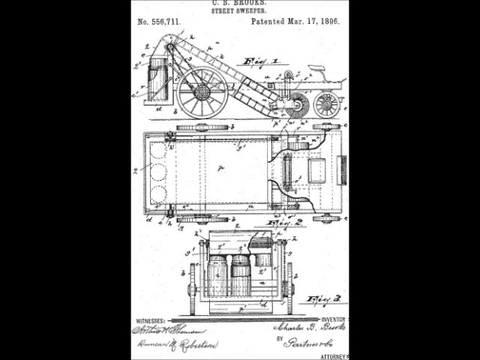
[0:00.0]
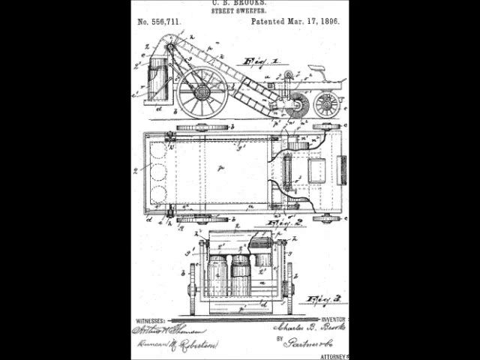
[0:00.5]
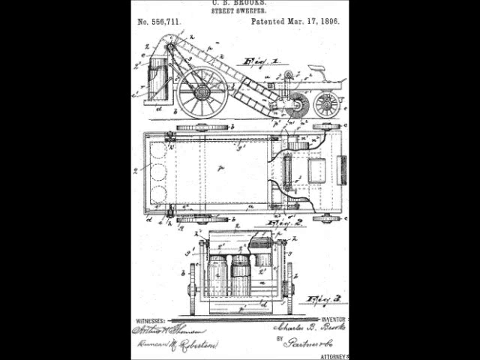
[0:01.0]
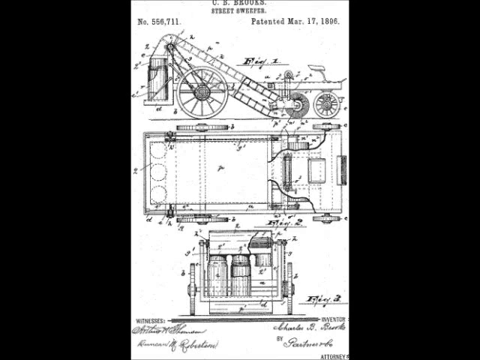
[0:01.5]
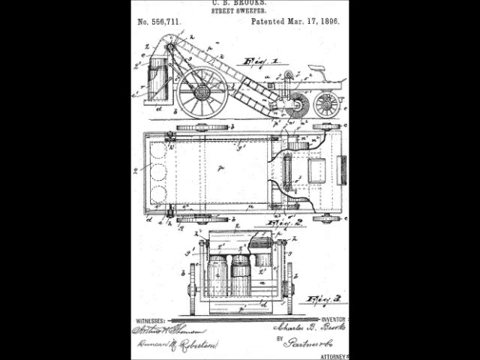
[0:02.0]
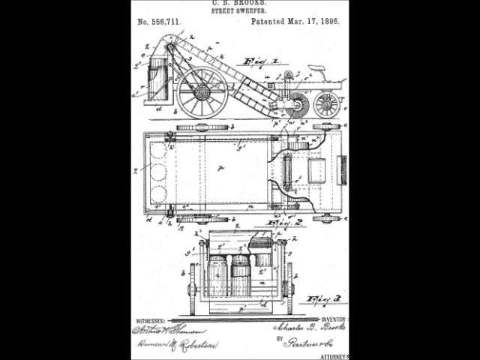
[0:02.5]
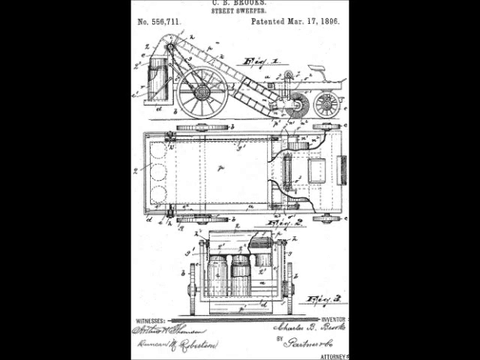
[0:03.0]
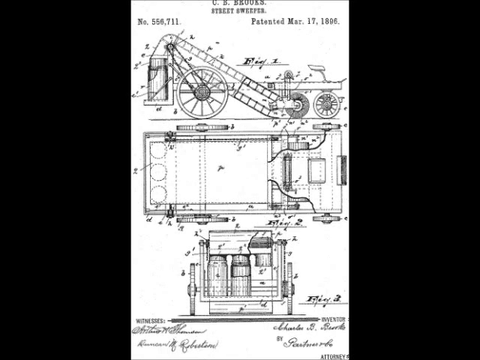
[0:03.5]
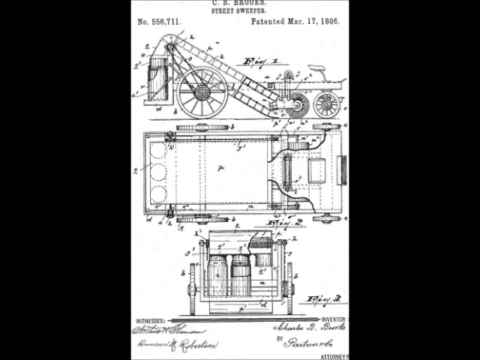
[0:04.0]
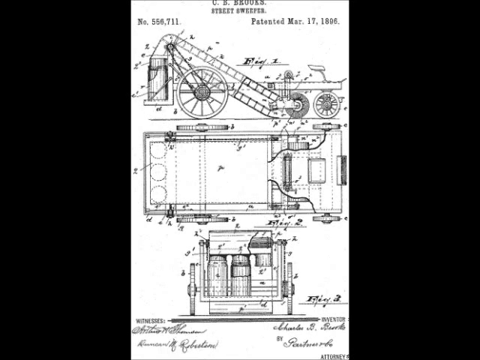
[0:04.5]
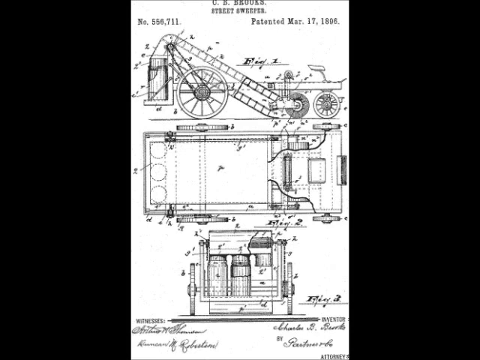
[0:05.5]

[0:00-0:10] The video opens with a diagram arranged in three levels. At the very top it reads "CB Brooks Street Sweeper number 556711," and at the top right it reads "Patented March 17, 1896." The diagram includes a side view, a top view and a back view. The side view has many parts labeled with letters of the alphabet. It shows two wheels, a wheel in the front and a bigger wheel in the back, and a circular street sweeper somewhat closer to the front wheels, along with the whole process of taking debris and carrying it up and around the back wheel into a basket at the back. The top view shows three tubes that trash from the street can be dumped into, and the back view shows two full containers and a third that is somewhat different, possibly the motor.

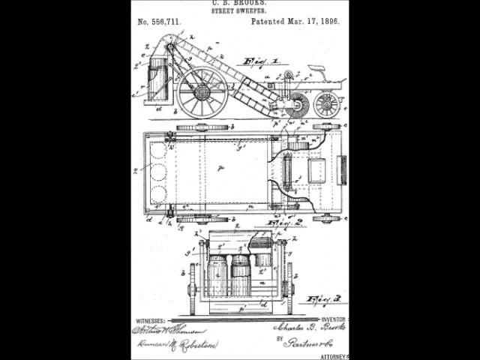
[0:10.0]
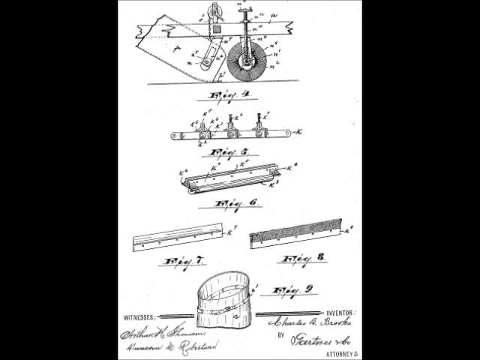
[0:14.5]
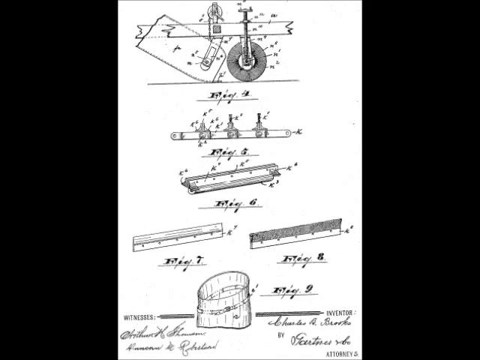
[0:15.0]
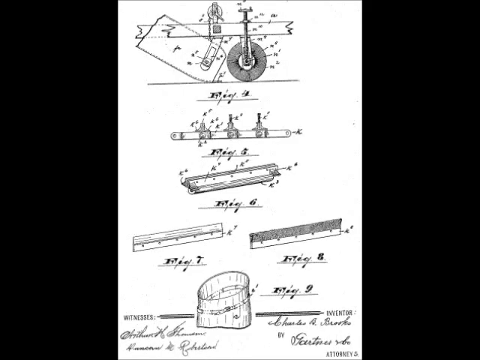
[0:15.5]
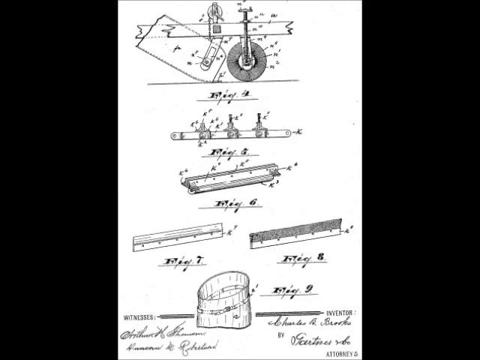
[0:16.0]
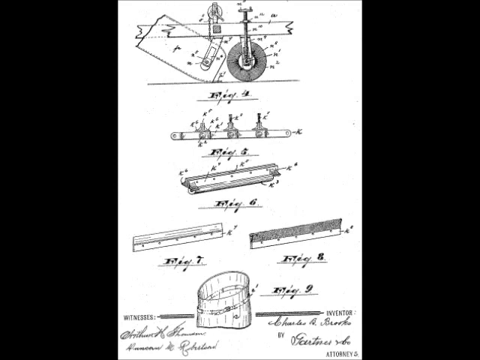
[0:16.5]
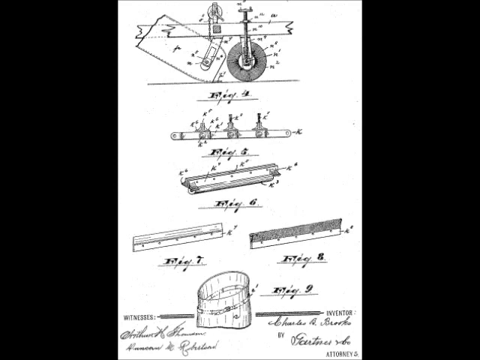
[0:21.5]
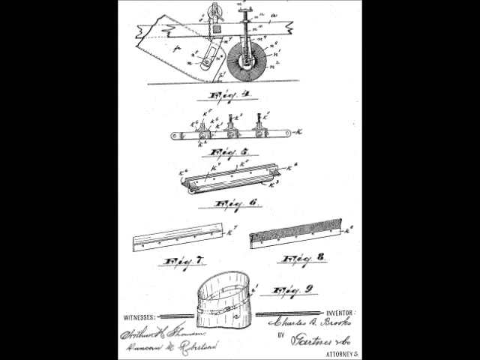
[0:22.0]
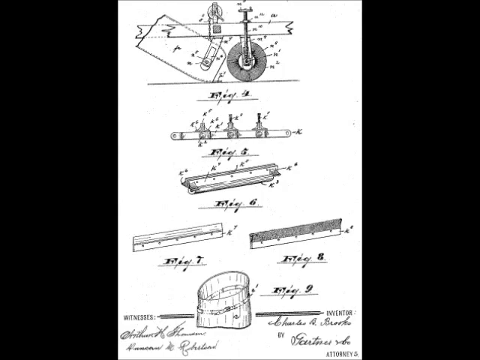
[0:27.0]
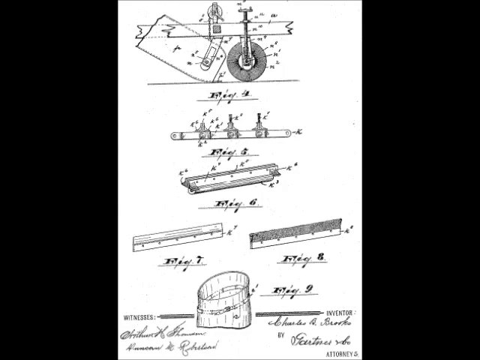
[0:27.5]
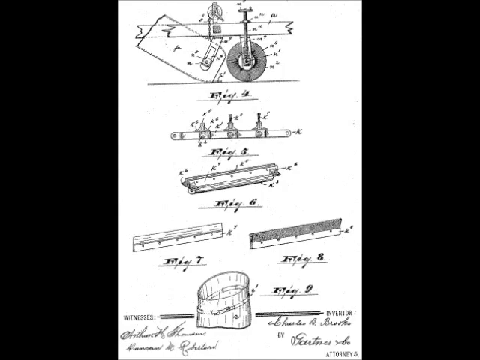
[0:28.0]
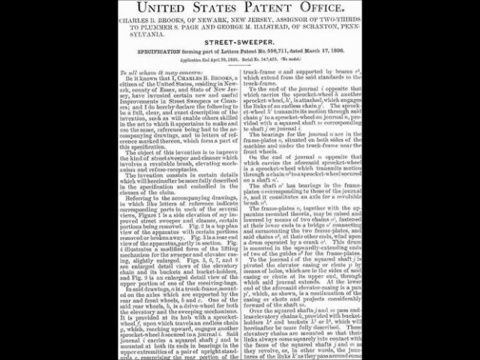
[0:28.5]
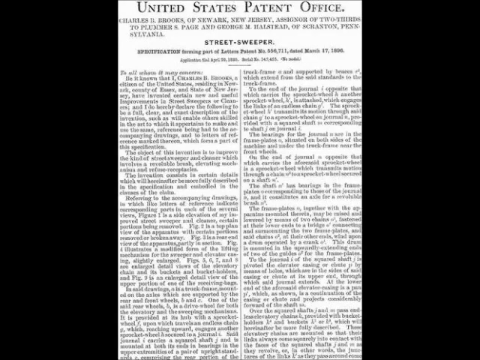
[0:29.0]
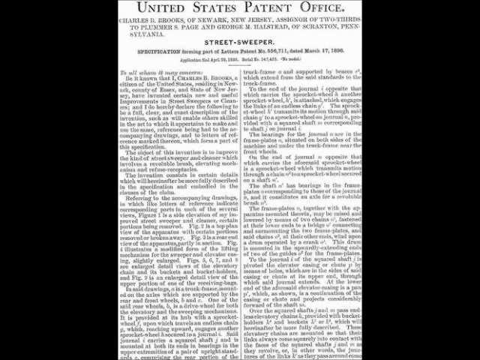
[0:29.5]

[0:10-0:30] A diagram of a street sweeper shows a side view, a top view and a back view. The side view shows a large wheel in the back and a smaller wheel in the front, with the sweeper's brushes just behind the front wheel and a ramp that debris goes up before dropping into baskets at the back. The top view shows three such baskets at the back. The bottom view shows two canisters at the back and a third that is a little less complete. The diagram is from 1896, when the street sweeper was patented. The next image shows more action: a closer look at the sweeping mechanism itself, the brush, and the device trailing it that picks up the debris being swept into it, with various parts of the machine illustrated. Then a United States Patent Office page gives details; it looks like a newspaper article of some sort.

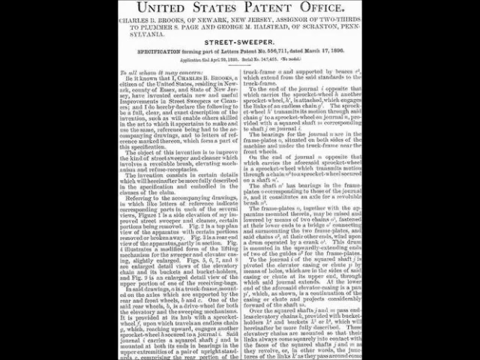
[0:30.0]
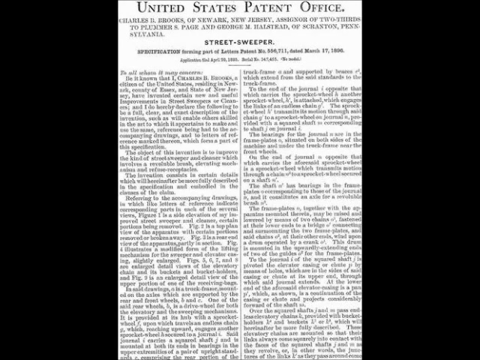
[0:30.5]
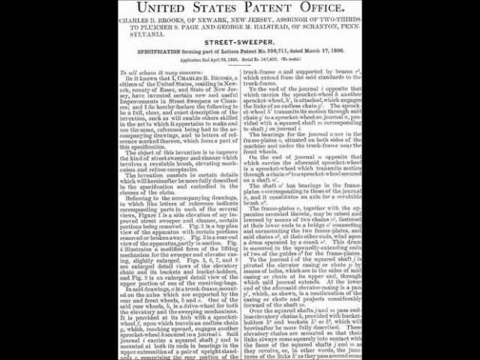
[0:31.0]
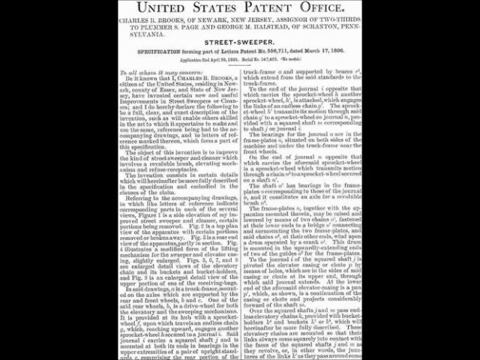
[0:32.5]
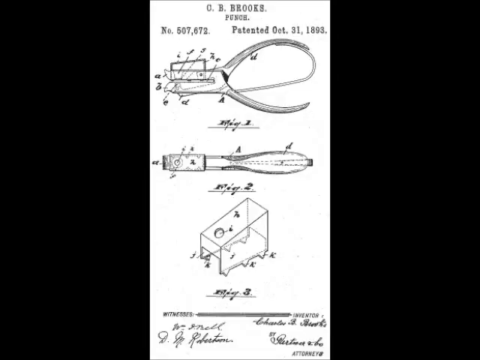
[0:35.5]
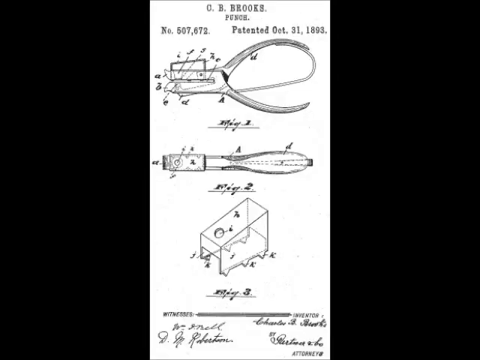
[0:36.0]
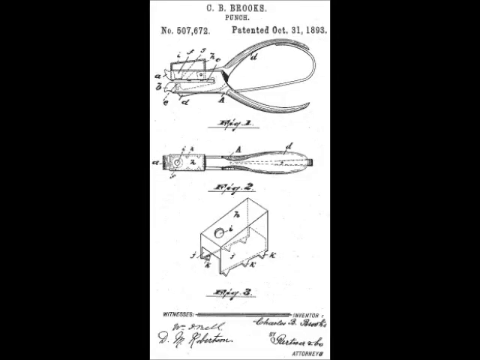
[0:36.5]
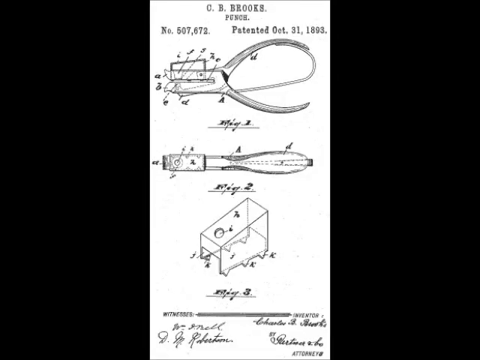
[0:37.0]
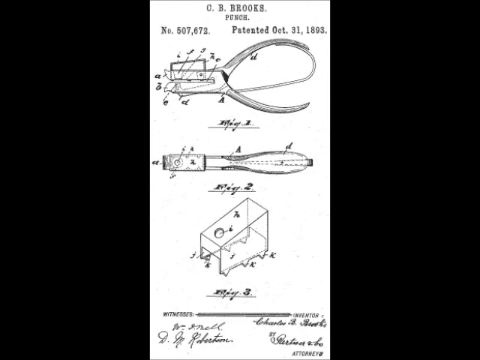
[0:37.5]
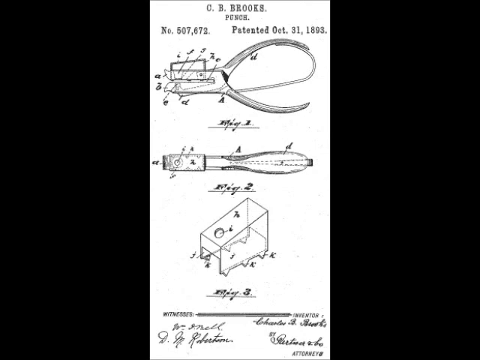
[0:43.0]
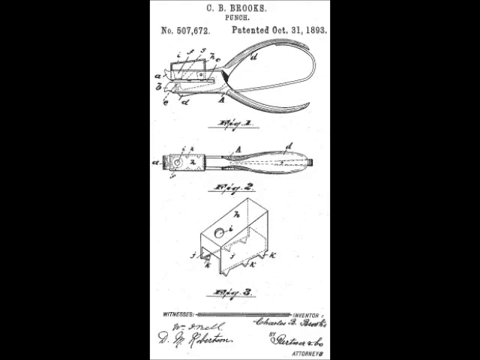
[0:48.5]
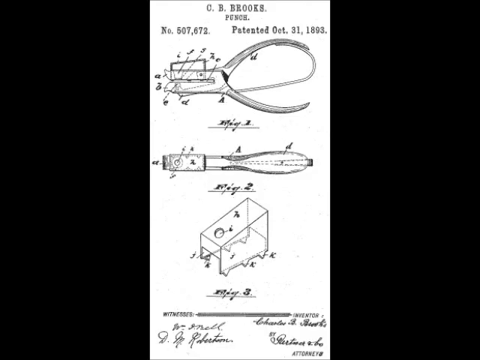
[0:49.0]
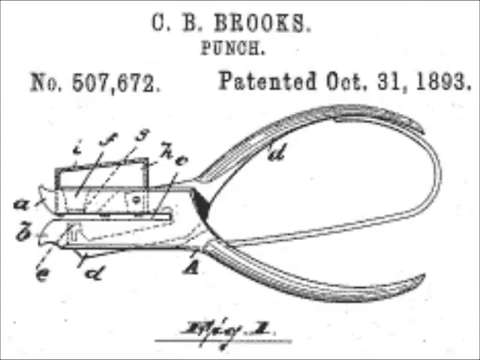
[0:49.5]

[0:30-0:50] What looks like a newspaper article reads "United States Patent Office" at the top. Below that is a short description that names Charles B Brooks of Newark, New Jersey, and George Halstead of Scranton, Pennsylvania, and below that it reads "Street Sweeper," followed by a specification and a blurb, then what look like two columns of text. The next image is a diagram of a handheld punch for punching a hole in a piece of paper or a ticket. It looks like a pair of pliers with a metal part in it that forces it back open. At the top it reads "C.B. Brooks," and below that "punch." On the left it reads "number 507,672," and on the right "patented October 31, 1893." The diagram shows a side view, a top view, and a closer view of the hole-punching mechanism, which is covered at the top to collect the chads as they are punched out of a ticket.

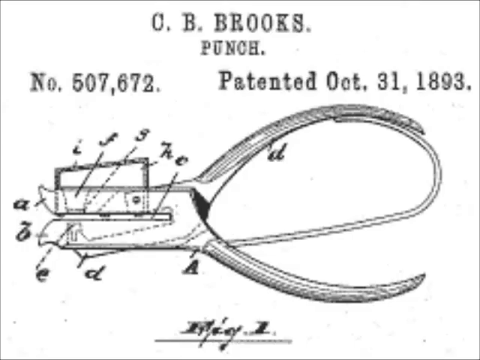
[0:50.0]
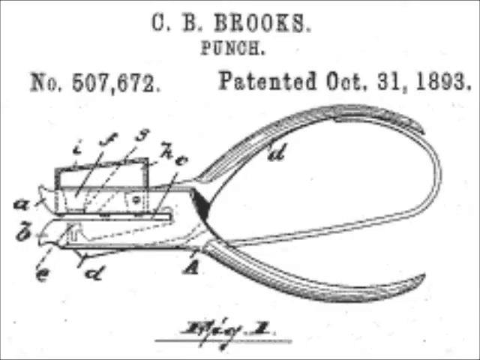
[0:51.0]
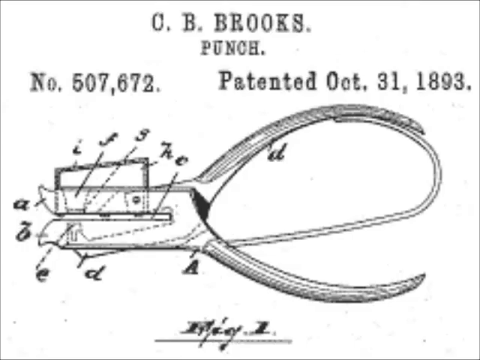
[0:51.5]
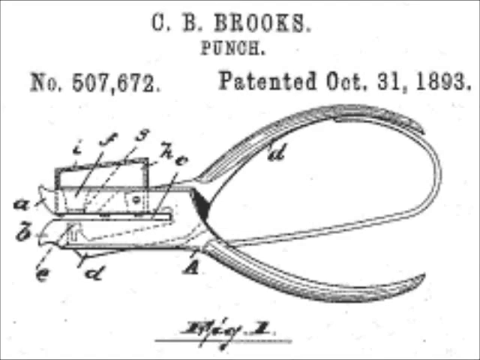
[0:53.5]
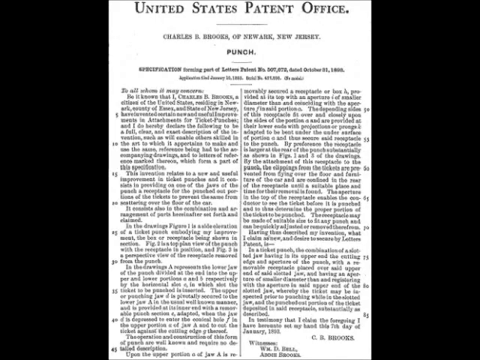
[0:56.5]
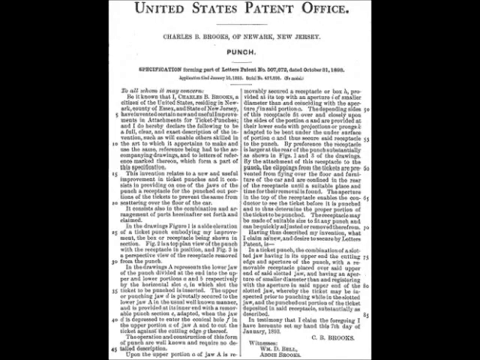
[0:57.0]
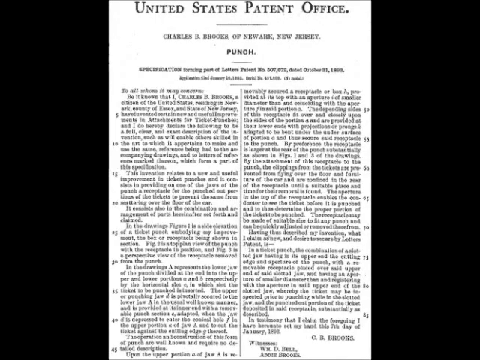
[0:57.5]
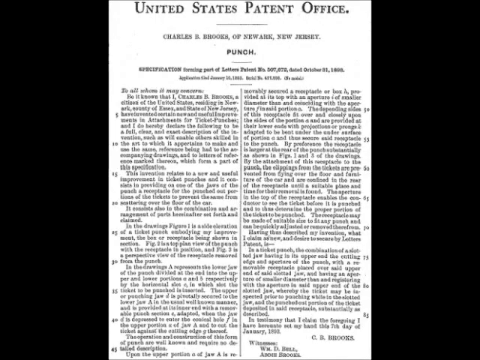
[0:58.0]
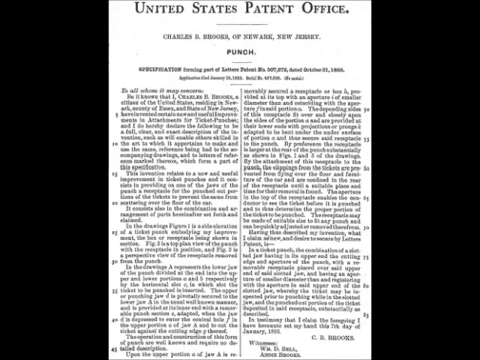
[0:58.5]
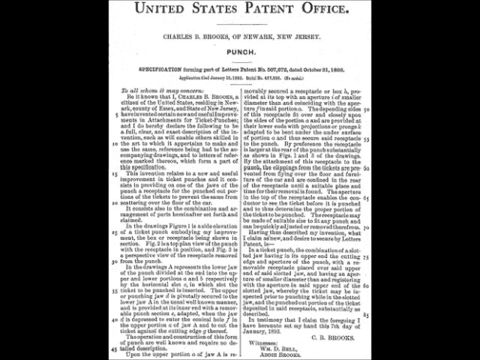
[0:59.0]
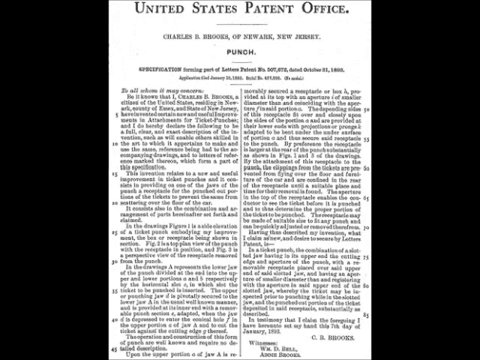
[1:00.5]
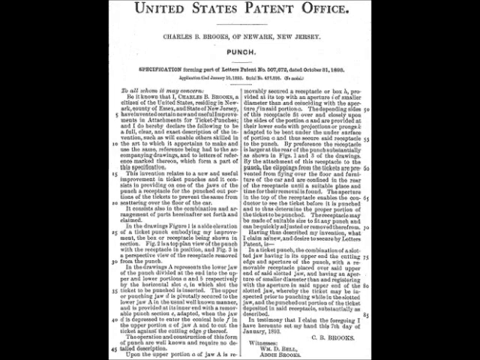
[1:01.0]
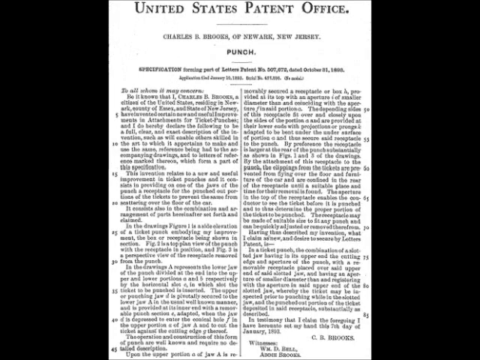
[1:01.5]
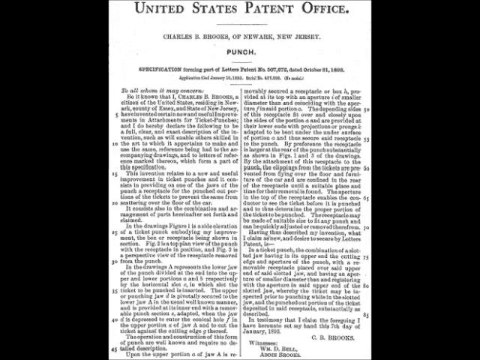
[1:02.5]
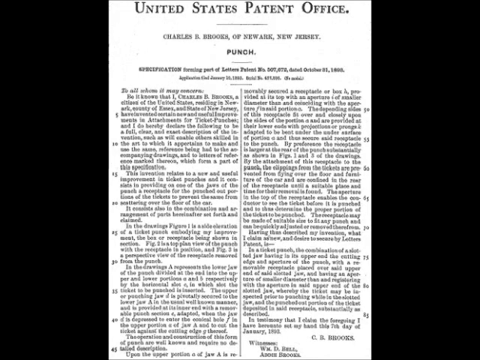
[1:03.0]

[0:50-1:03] A closer view of a punch appears. At the top it reads "CB Brooks," below that "punch," below that on the left "number 507672," and on the right "patented Oct. 31, 1893." Below that is a diagram with a side view of the punch, showing the grip handles used to do the punching and various parts labeled with lowercase letters of the alphabet plus one uppercase A. There is also a little container that holds the chads as they are punched from tickets. Next comes a page describing the punch; it almost looks like a newspaper article but is a document. At the top it reads "United States Patent Office," below that "Charles B Brooks of Newark, New Jersey," then the word "punch," followed by a specification. It gives the details, including the date. Below that are two columns with numbered lines, about 20 lines on the left and about 20 on the right.